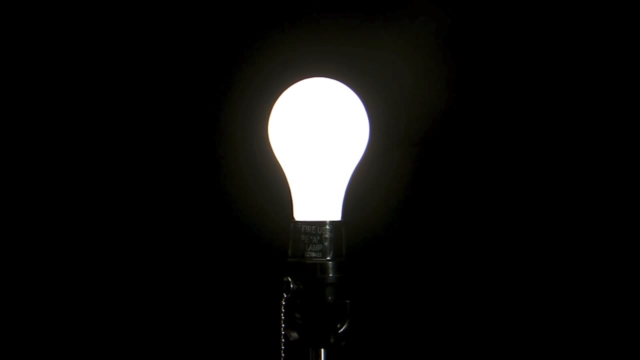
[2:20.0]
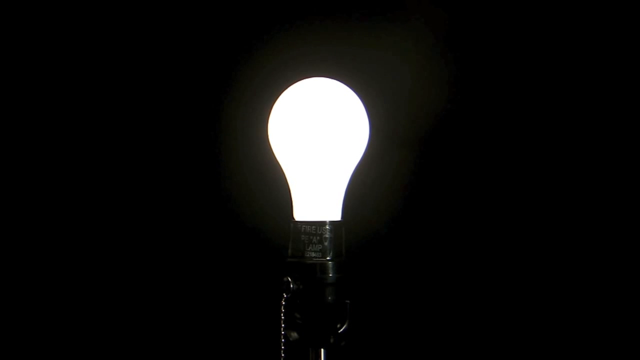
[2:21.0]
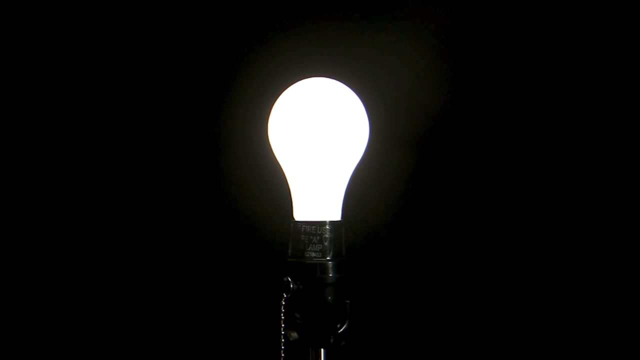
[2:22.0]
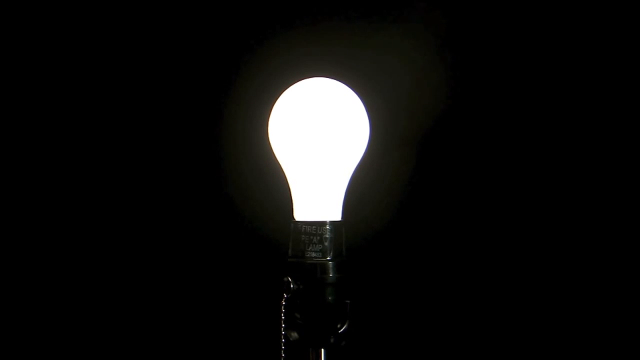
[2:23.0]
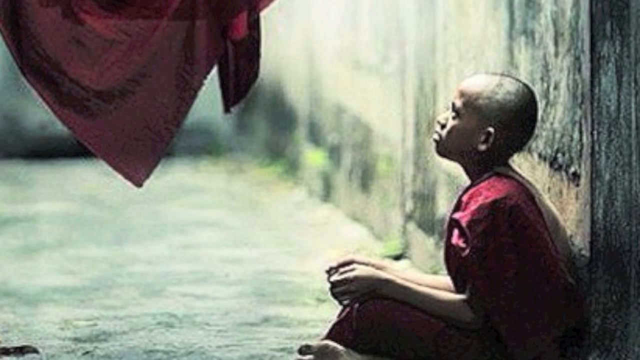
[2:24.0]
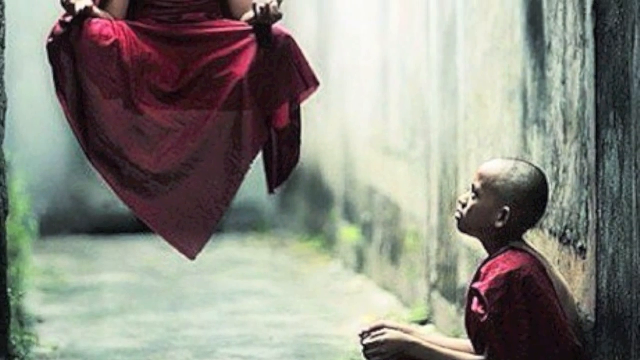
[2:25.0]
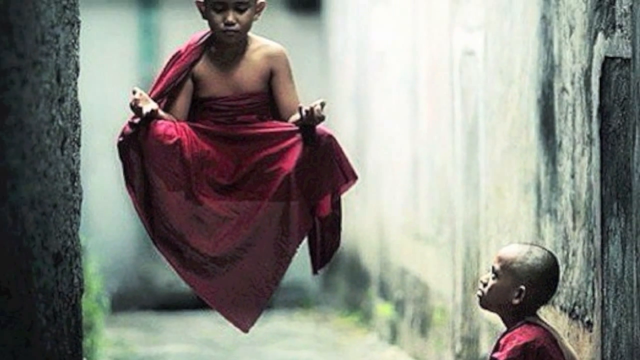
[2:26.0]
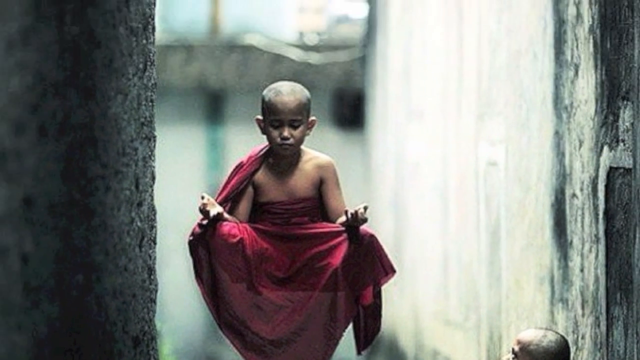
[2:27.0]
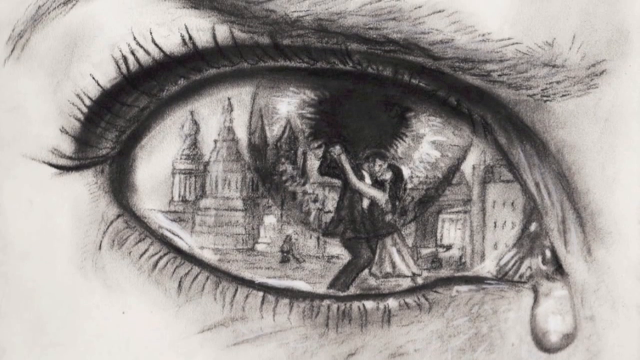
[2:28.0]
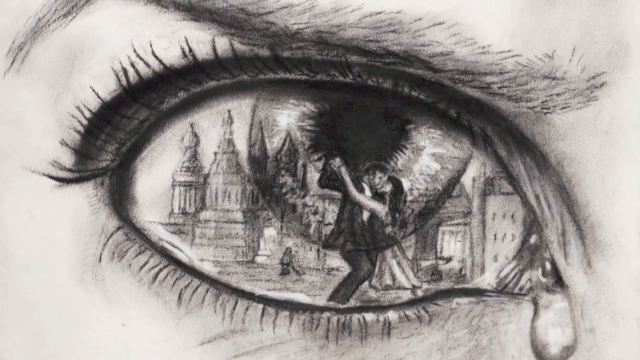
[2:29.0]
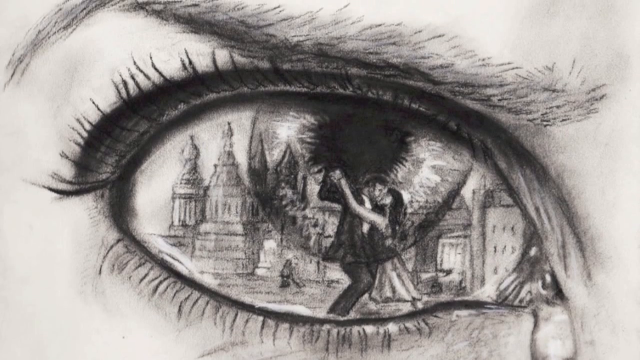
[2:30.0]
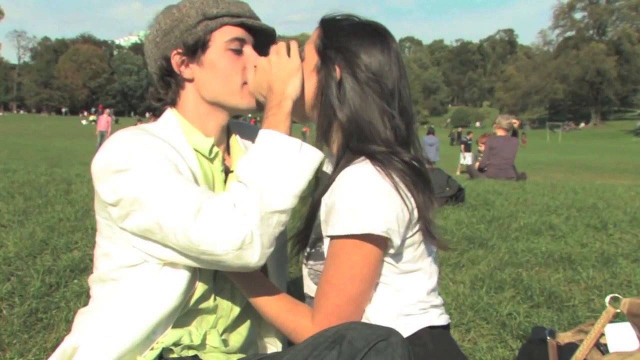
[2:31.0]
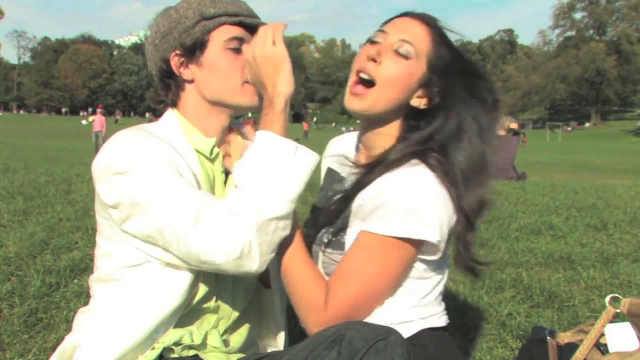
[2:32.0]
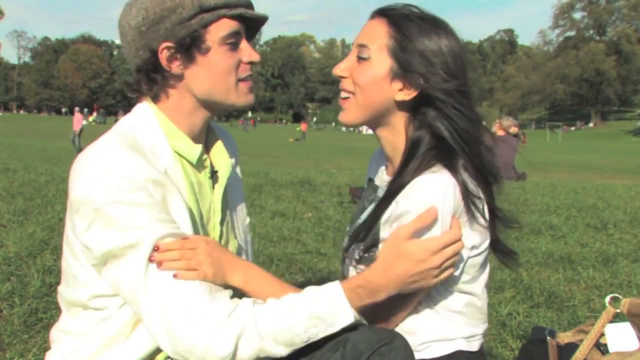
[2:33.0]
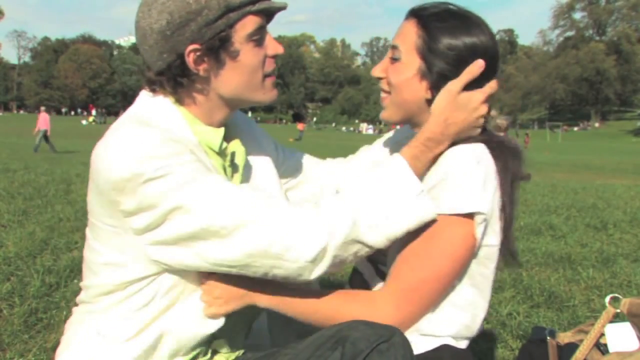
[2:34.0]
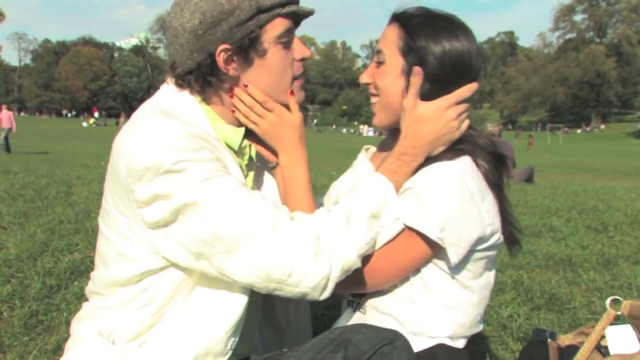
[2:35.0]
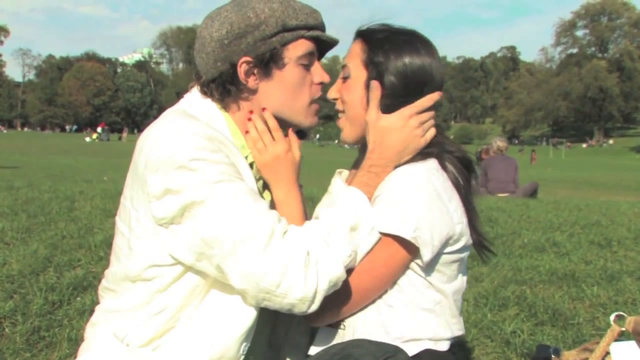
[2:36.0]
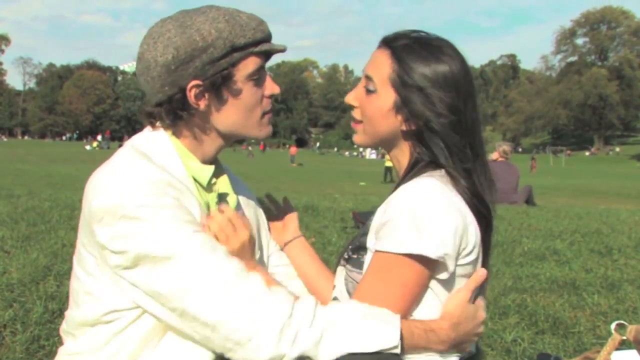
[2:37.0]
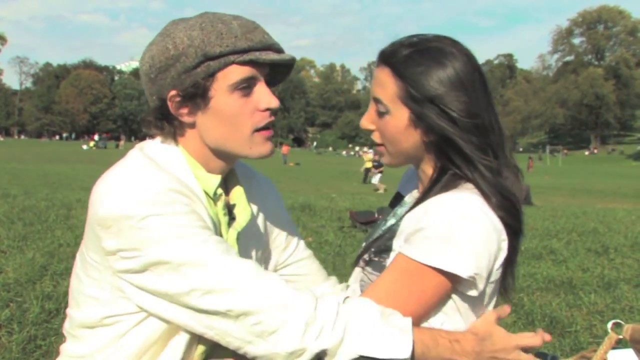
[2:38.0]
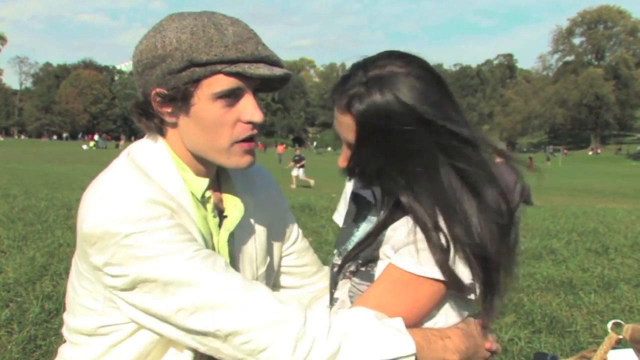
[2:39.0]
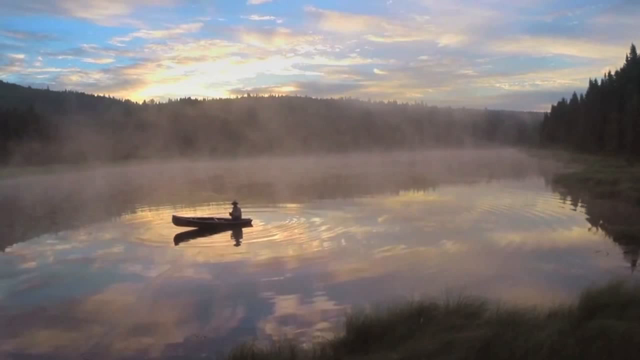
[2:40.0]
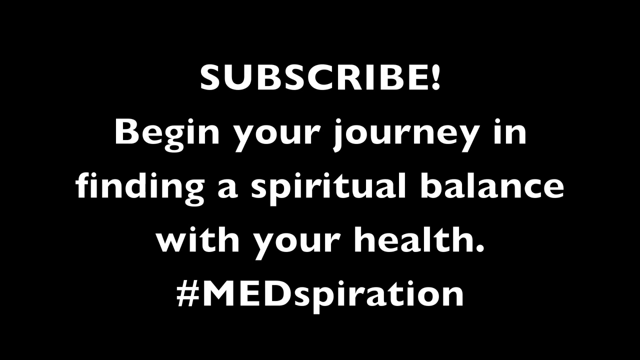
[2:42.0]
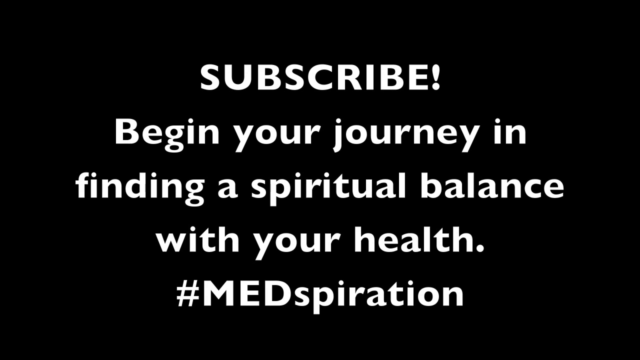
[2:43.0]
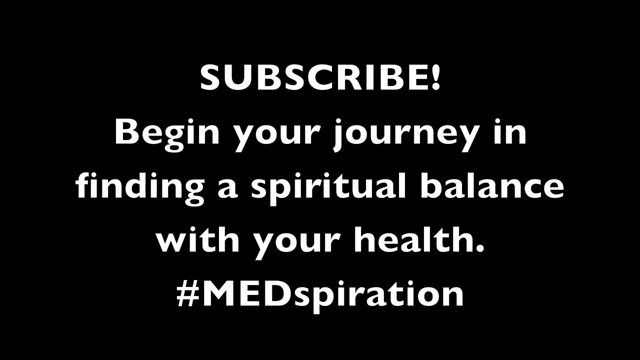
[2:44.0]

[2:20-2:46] Pictures show people sleeping on the floor with their legs up, and the two yellow lines of a road are drawn on top of them. Next, clothes lie on the steps of a house in an illustration of being worn out. Another illustration shows an old man kissing an old lady on the forehead. Then a bulb lights up. The scene changes to a small child and an older man looking at another child, a monk, who is lifted up to a certain level. Next, an eye appears, with a character looking at two individuals in a romantic dance. A female and a male in a relationship kiss each other on the nose and continue talking, and a lake is visible. The video ends on a blank space with the text "subscribe begin your journey in finding a spiritual balance with your health #med spiritual spirit inspiration".